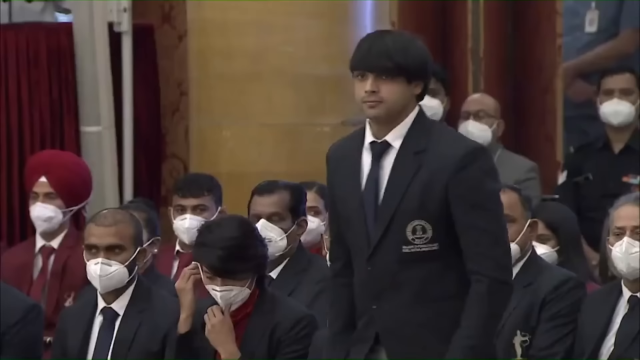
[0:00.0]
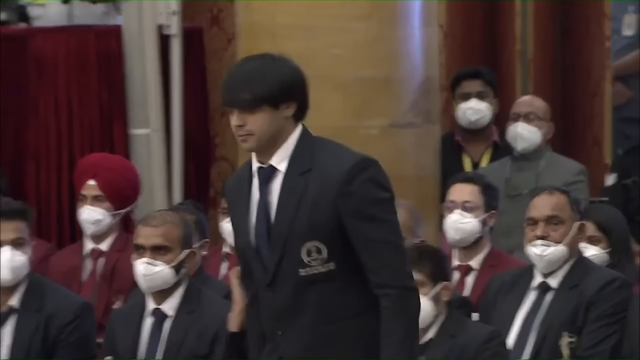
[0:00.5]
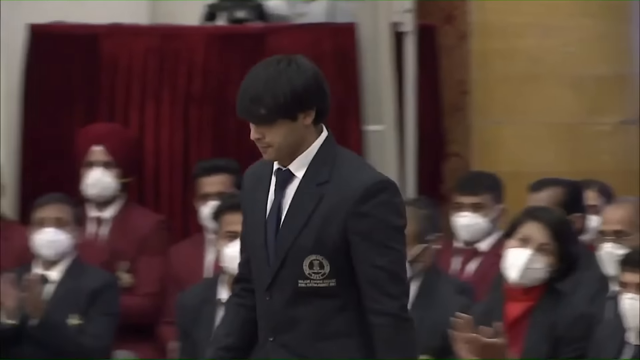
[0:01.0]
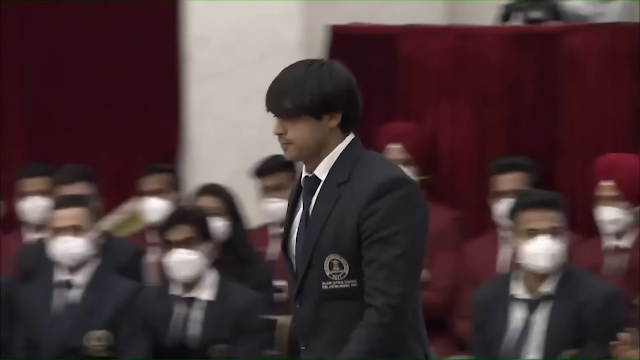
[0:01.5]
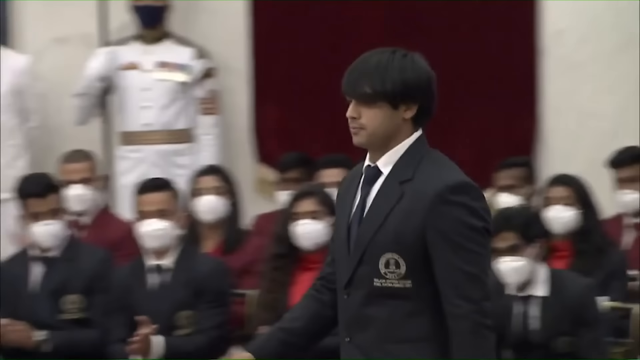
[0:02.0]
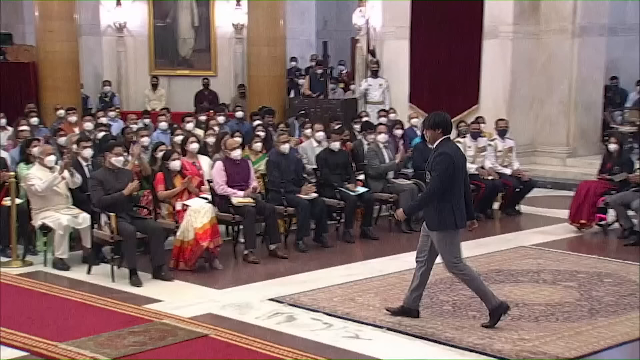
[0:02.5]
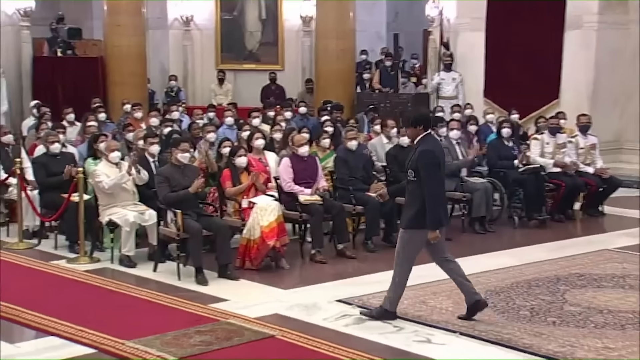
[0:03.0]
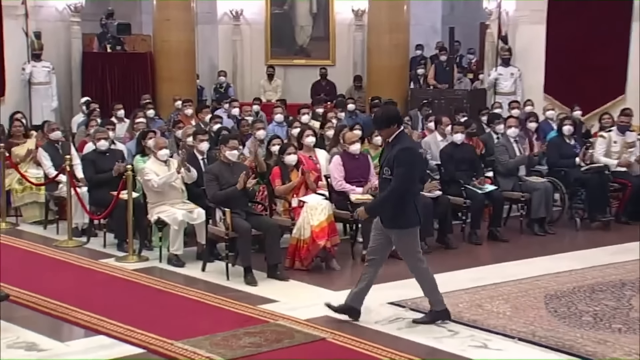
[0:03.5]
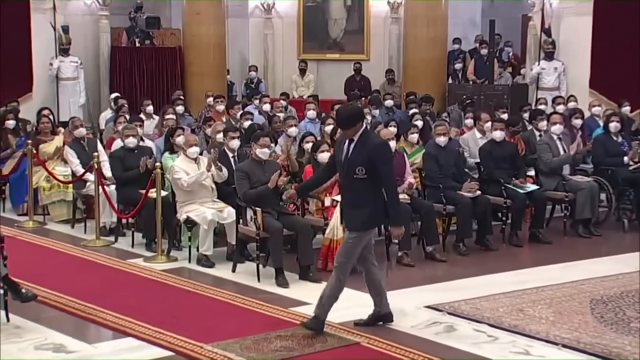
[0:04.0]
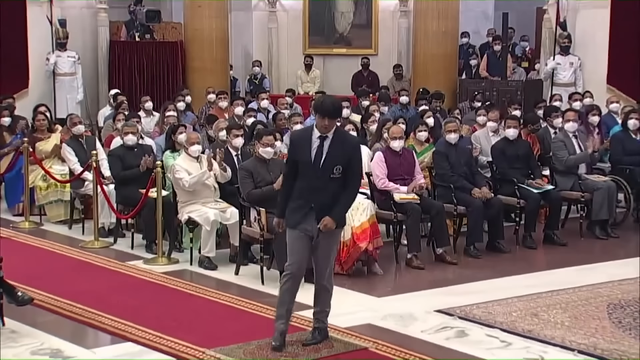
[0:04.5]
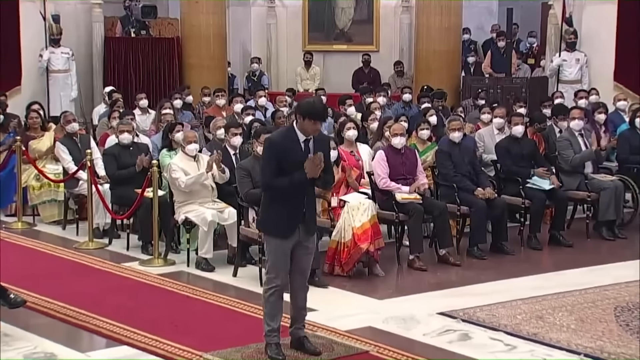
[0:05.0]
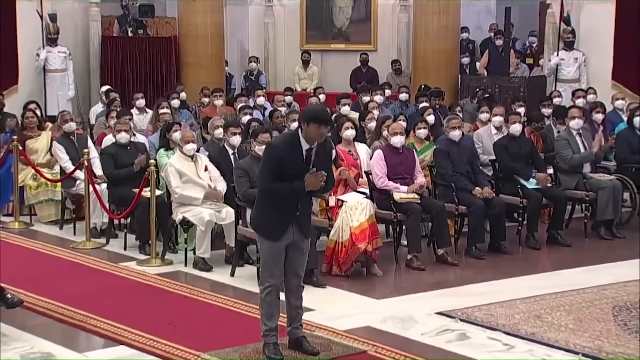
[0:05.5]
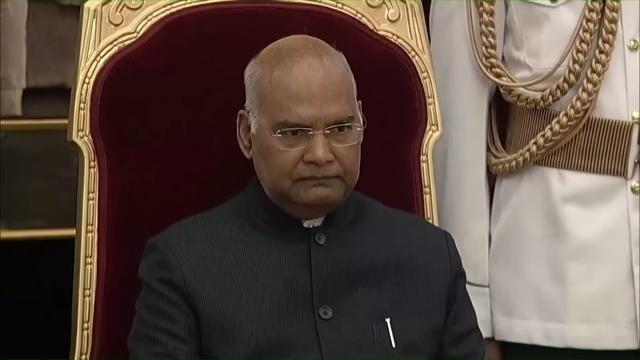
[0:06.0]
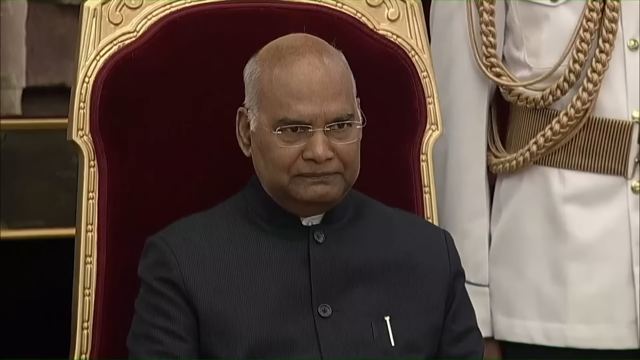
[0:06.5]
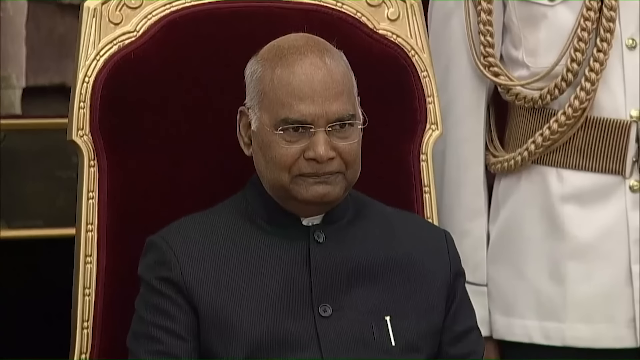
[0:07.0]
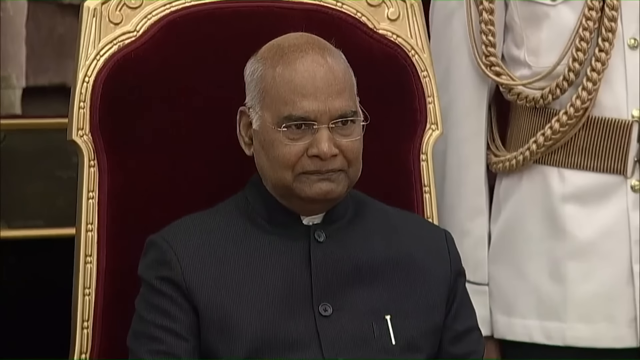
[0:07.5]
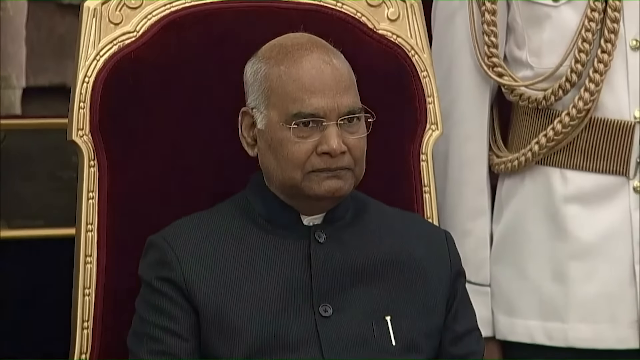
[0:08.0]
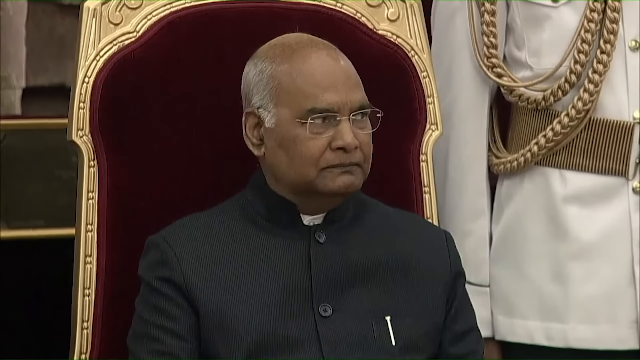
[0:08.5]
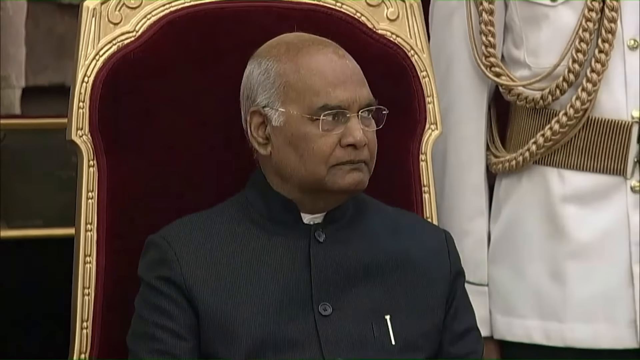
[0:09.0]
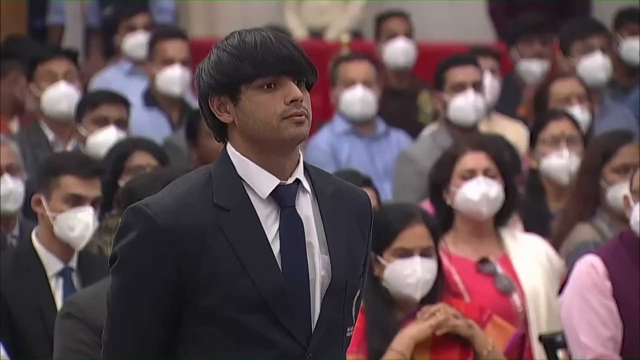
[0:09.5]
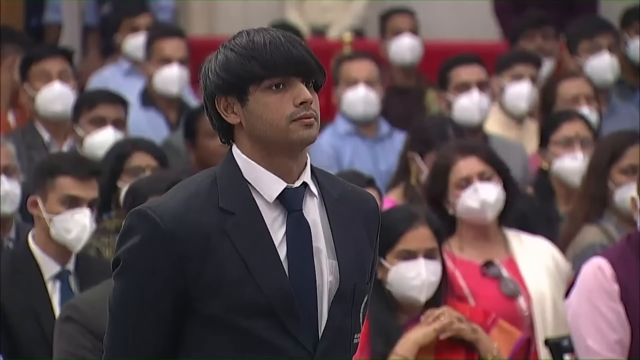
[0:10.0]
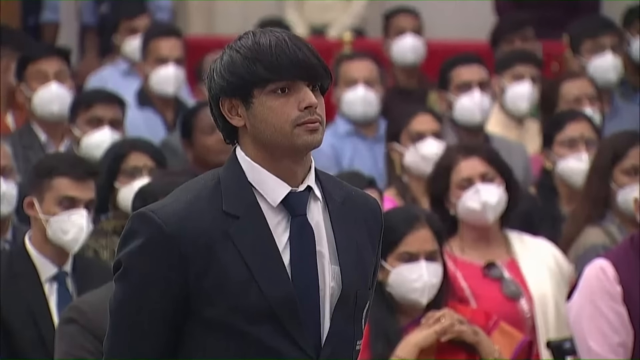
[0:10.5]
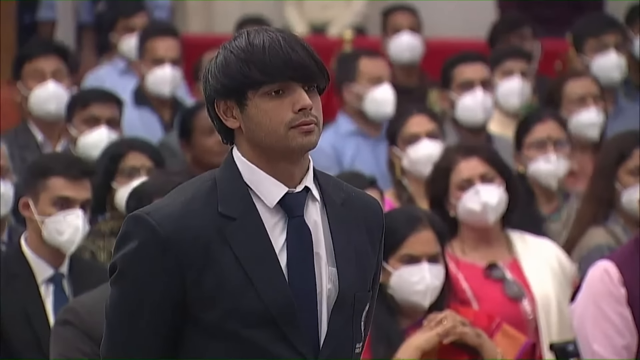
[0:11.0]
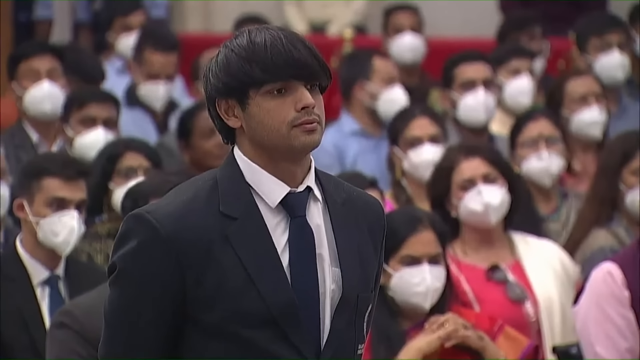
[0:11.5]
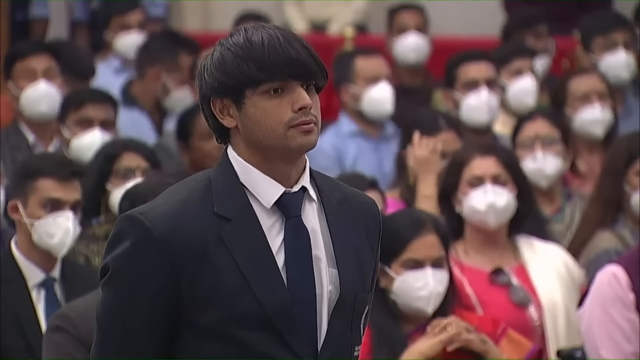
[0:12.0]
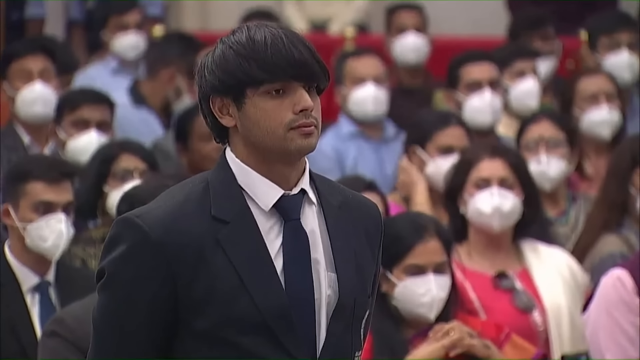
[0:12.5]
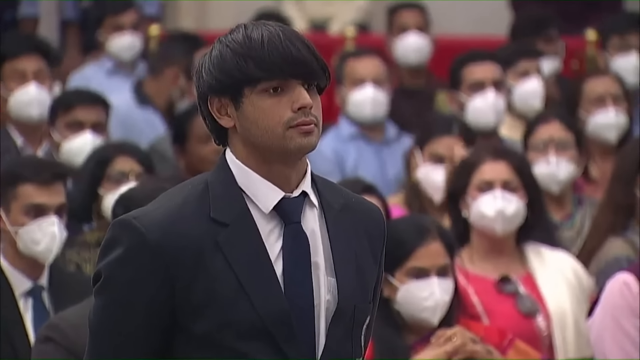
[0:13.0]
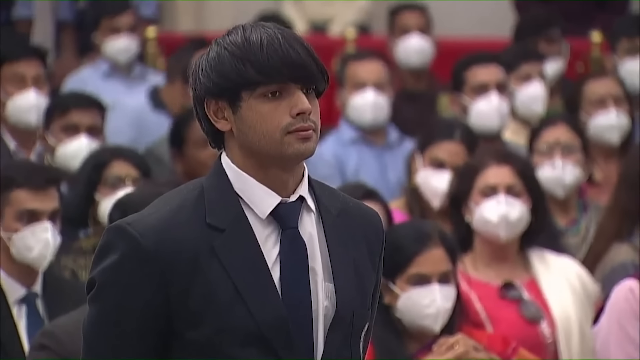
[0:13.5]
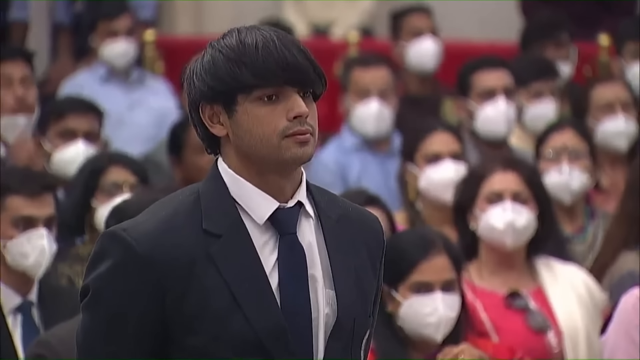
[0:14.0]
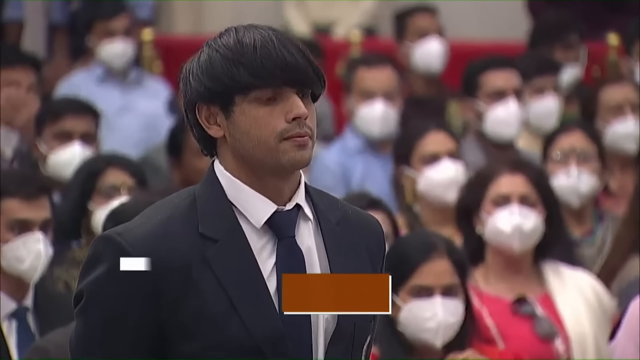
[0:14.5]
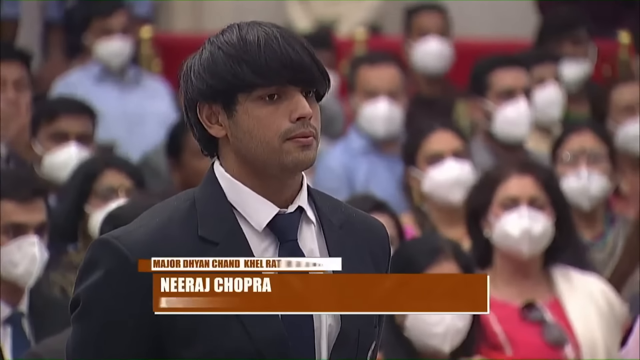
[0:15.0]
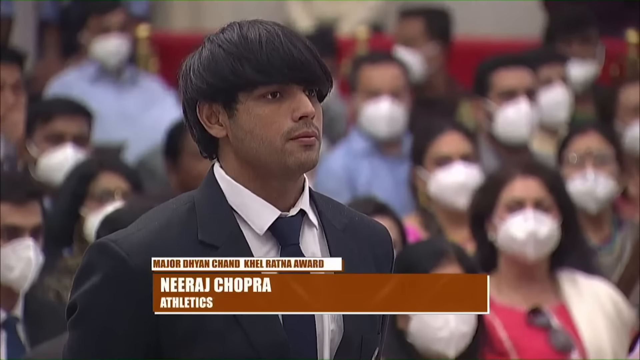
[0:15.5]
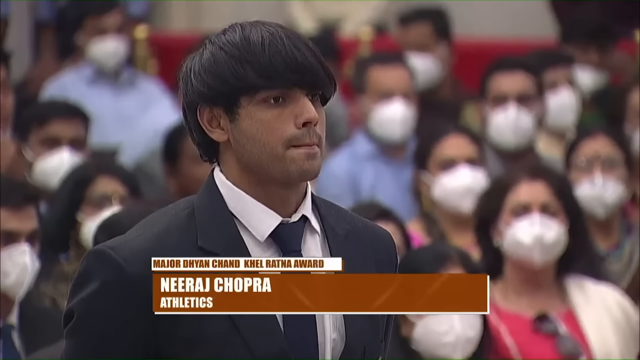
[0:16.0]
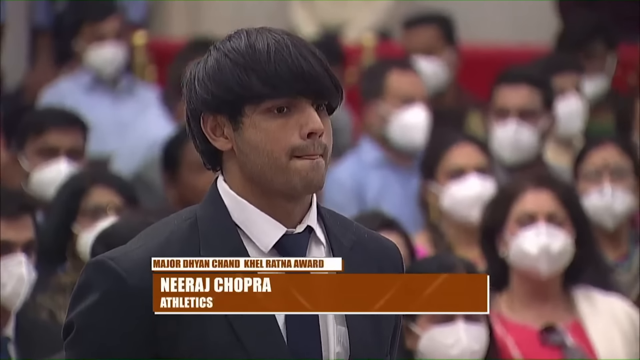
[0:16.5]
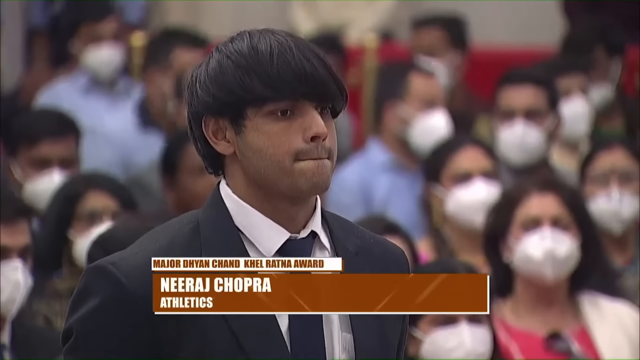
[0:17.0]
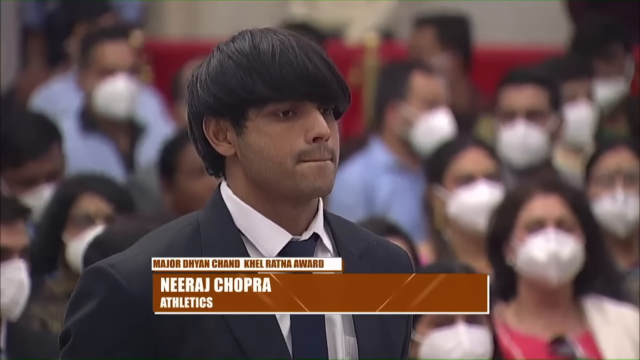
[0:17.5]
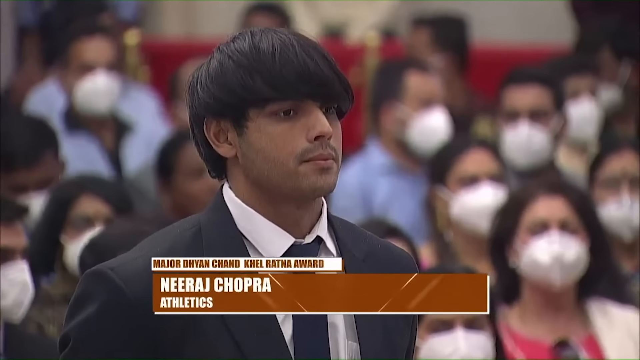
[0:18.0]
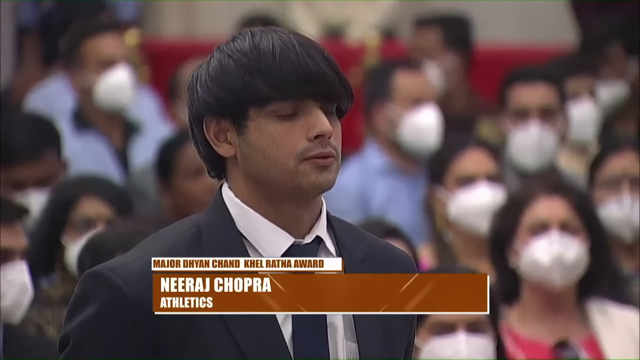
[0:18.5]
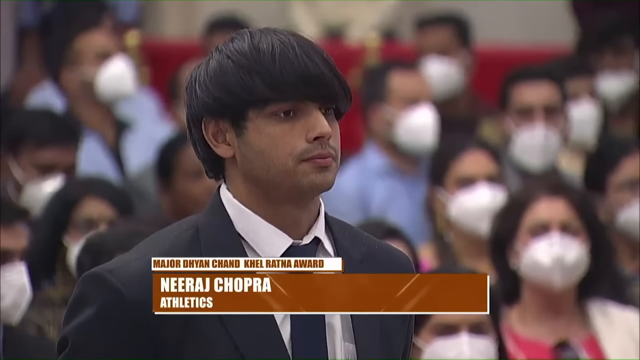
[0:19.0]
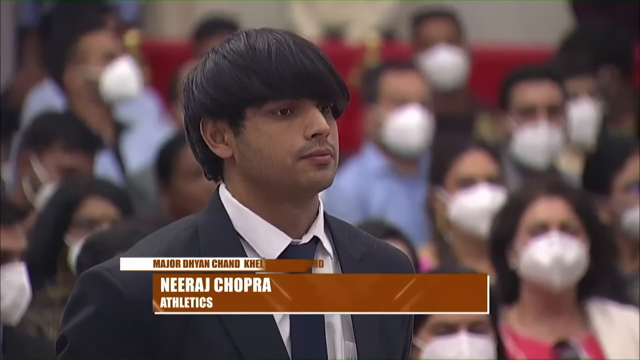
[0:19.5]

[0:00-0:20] The video, titled President Kovind Confers Major Dhyan Chand Khel Ratna Award 2021 on Shri Neeraj Chopra, shows a group of people, mostly men with some women, many in suits, sitting in an auditorium-style setting in a very fancy, official-looking room. Everyone sitting down wears a white face mask. A man in a black suit walks up the aisle. Guards are stationed at the entrances, dressed all in white, holding very tall spears and wearing tall headpieces. A very large news camera is visible. The audience applauds as the central man walks to the aisle and bows, and the video cuts to a man in a red velvet and gold throne, apparently President Kovind. The camera zooms in. A banner pops up identifying the man who walked up the aisle as "Neeraj Chopra," with the text "Athletics" and "Major Dhyan Chand Khel Ratna Award." The camera stays zoomed on him for a while.